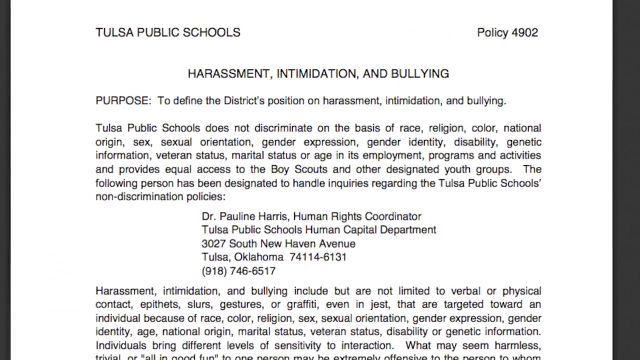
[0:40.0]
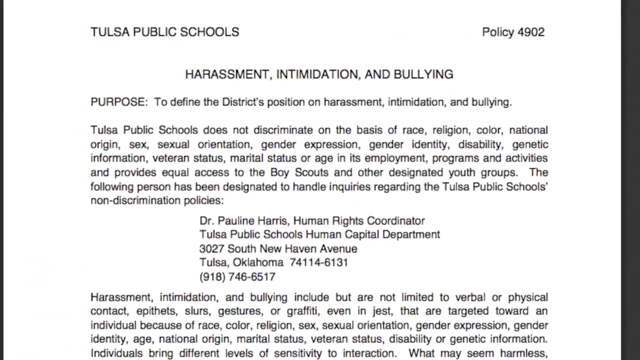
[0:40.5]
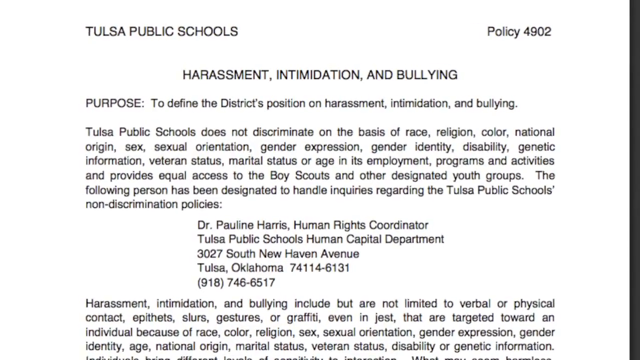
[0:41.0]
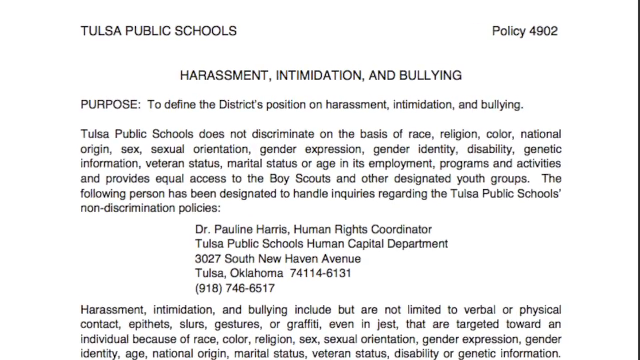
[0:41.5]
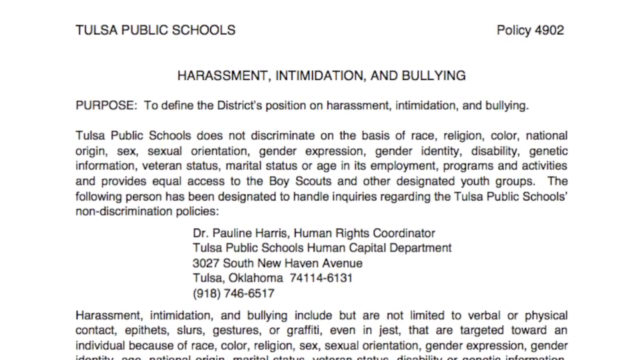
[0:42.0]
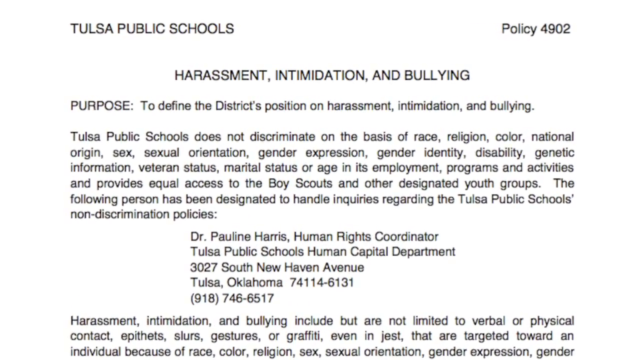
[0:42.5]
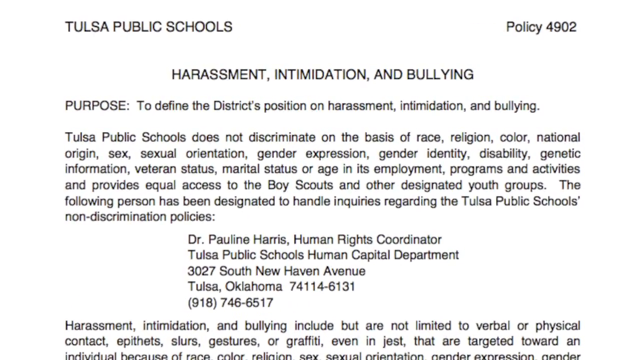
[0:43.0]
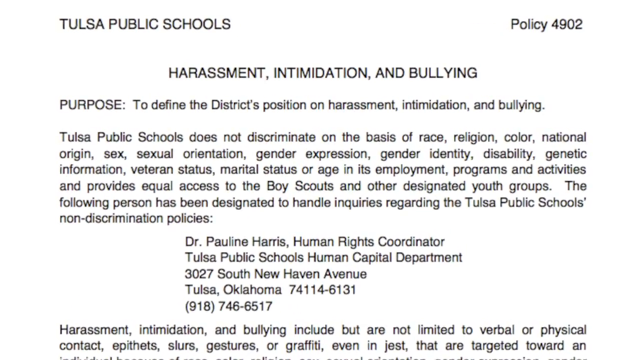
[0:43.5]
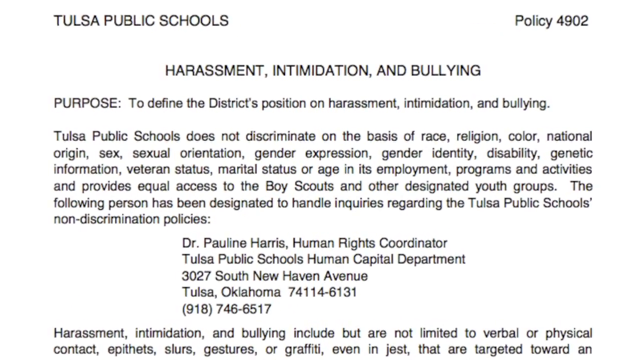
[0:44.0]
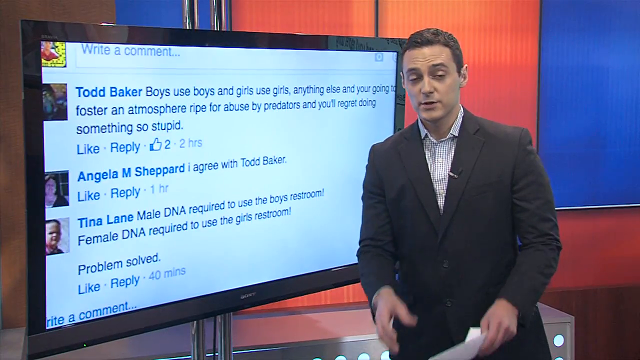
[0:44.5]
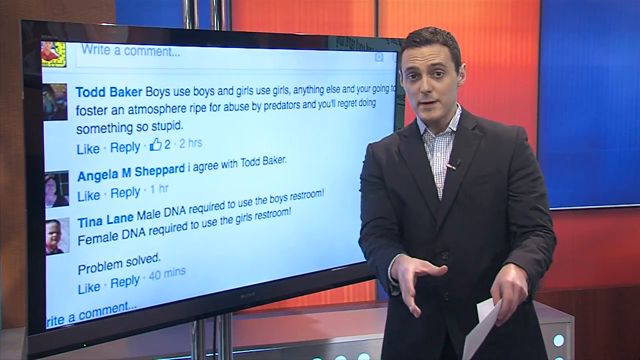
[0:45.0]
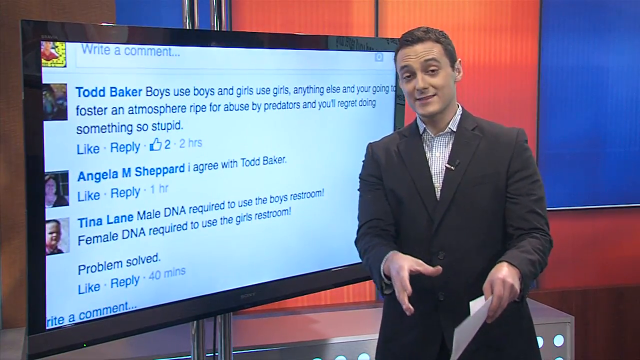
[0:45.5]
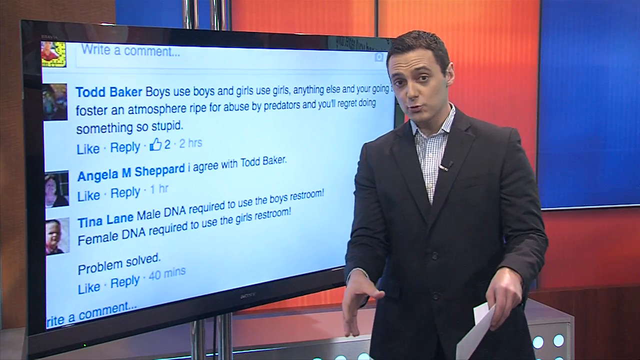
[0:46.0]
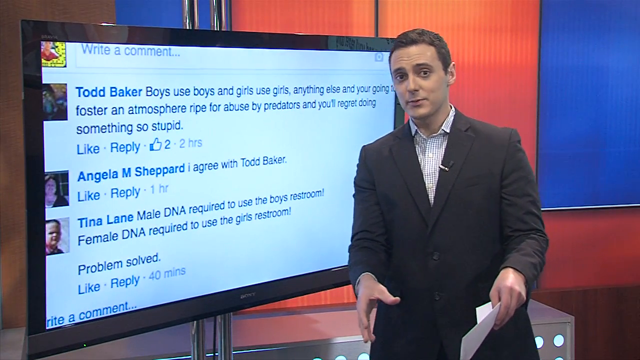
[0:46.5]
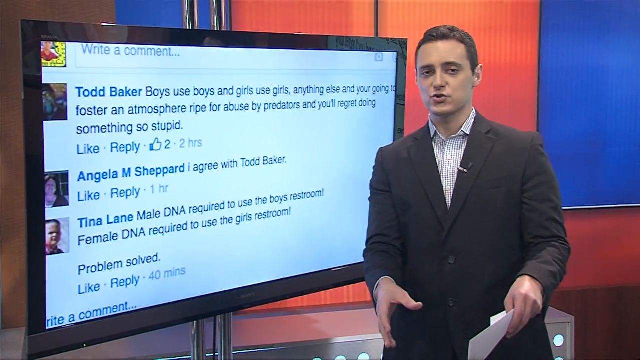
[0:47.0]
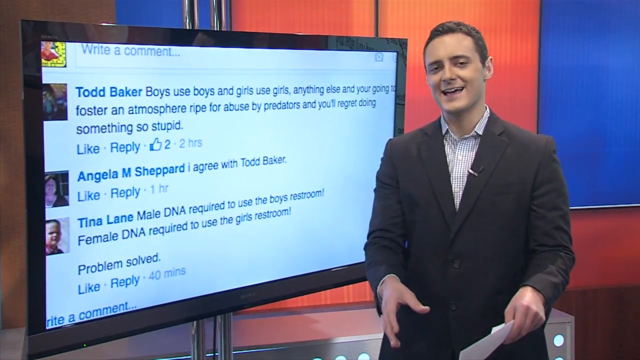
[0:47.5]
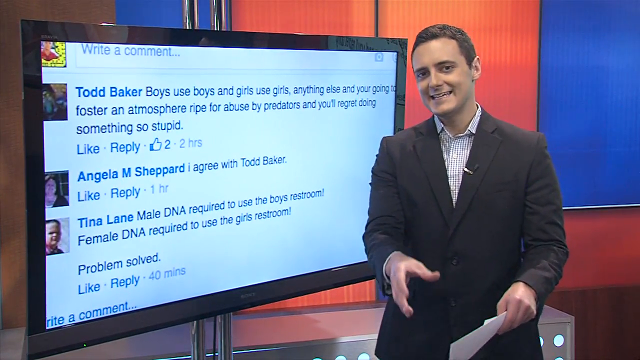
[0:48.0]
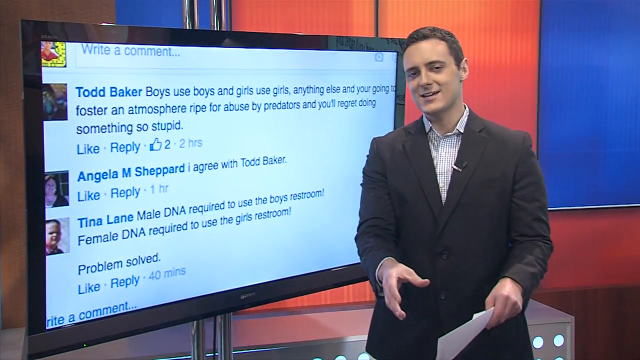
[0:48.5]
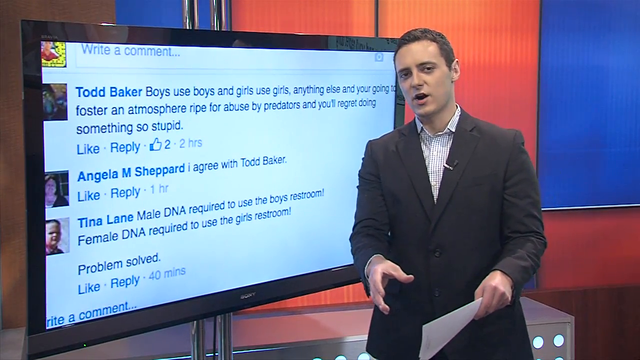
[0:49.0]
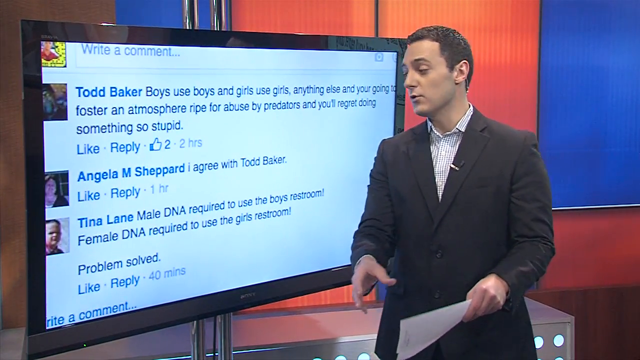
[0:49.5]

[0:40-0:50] The page shows the Tulsa Public Schools harassment, intimidation and bullying policy 4902, with lots of text and the school's address. The image zooms in and then cuts to a man in a studio holding some white cards in his left hand and moving his hands as he speaks. He stands in front of a TV displaying Facebook comments. The first, from Todd Baker, reads "boys use boys and girls use girls, anything else and you're going to foster an environment ripe for abuse by predators." The second, from Angela M. Shepard, reads "I agree with Todd Baker." The third, from Tina Lane, reads "male DNA required to use the boy's restroom, female DNA required to use the girl's restroom. Problem solved." The man wears a black suit jacket, has short brown hair, and kind of points to the screen as he talks.